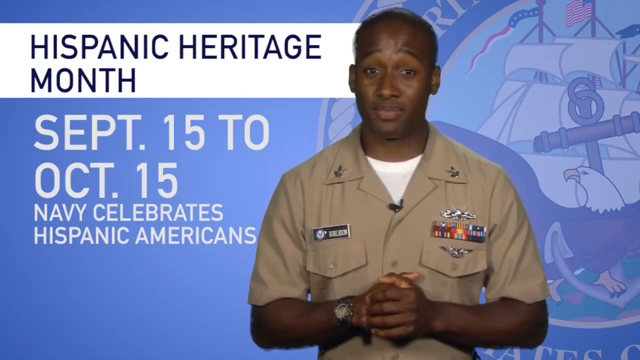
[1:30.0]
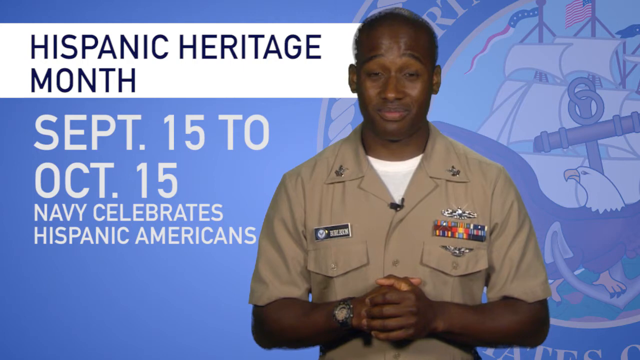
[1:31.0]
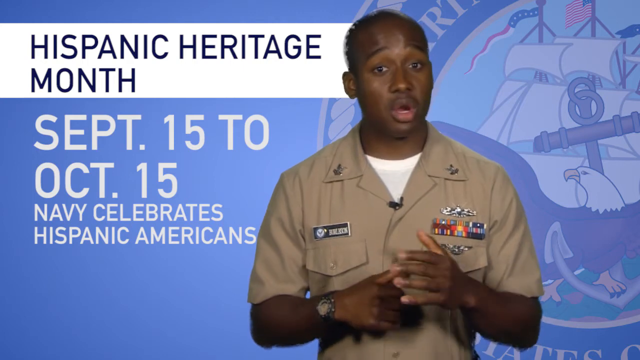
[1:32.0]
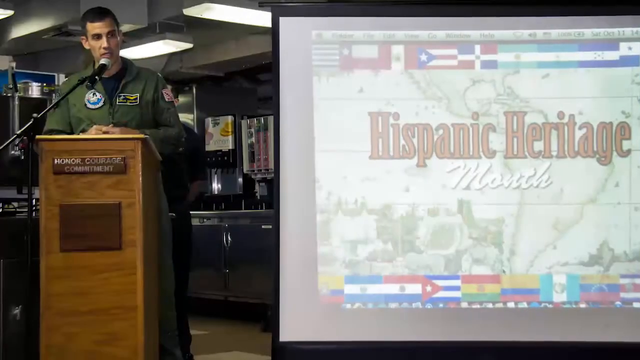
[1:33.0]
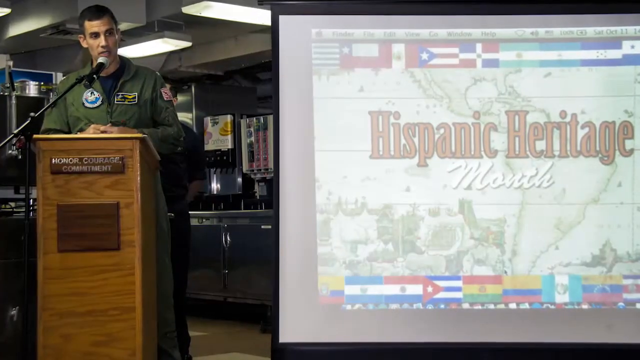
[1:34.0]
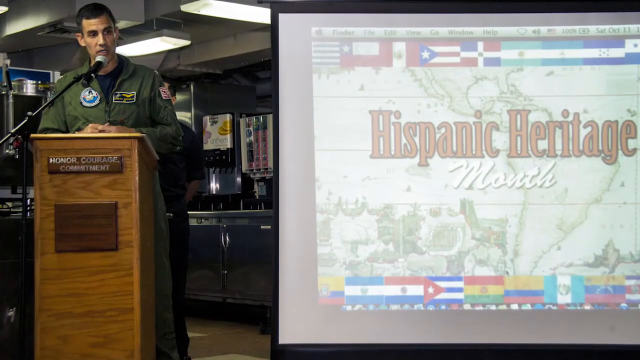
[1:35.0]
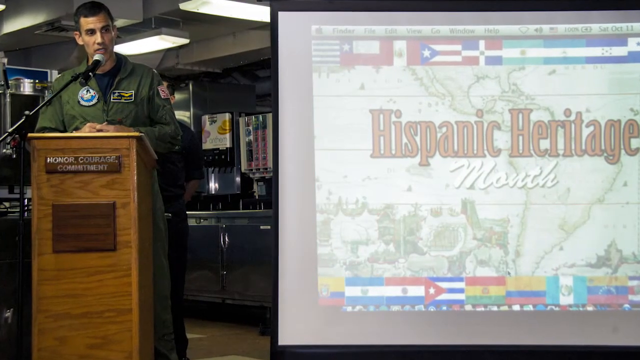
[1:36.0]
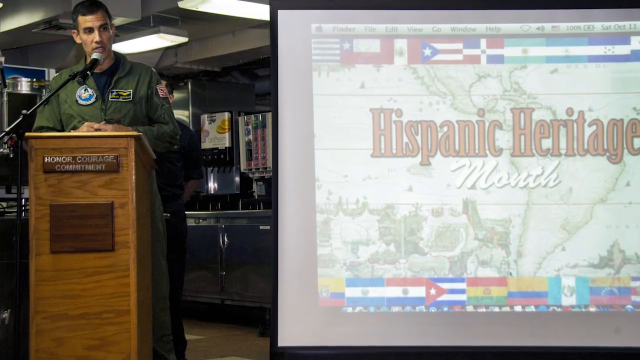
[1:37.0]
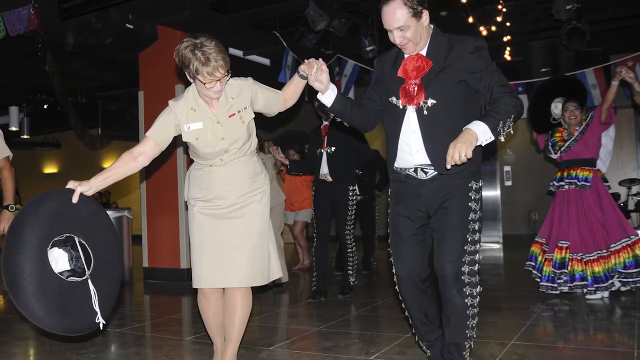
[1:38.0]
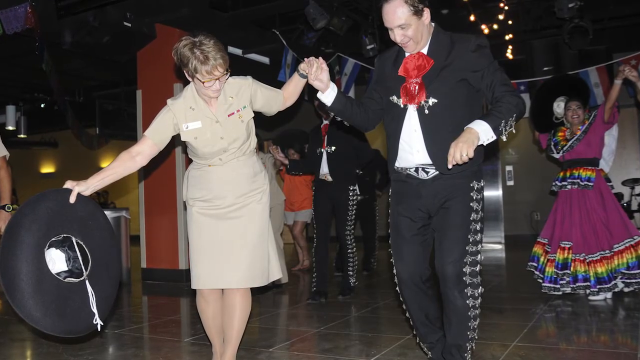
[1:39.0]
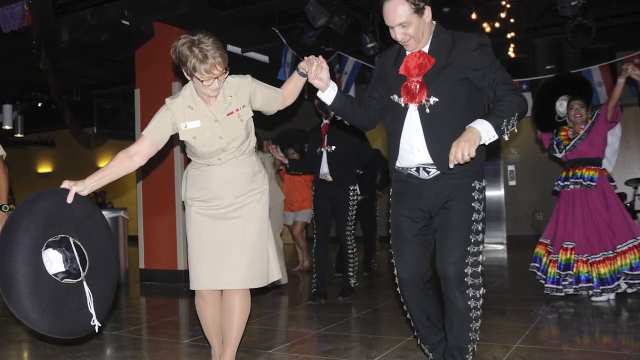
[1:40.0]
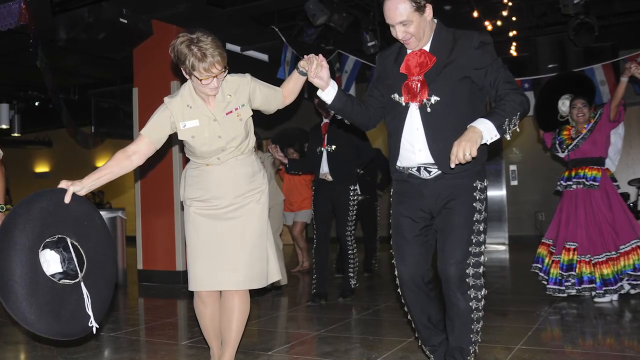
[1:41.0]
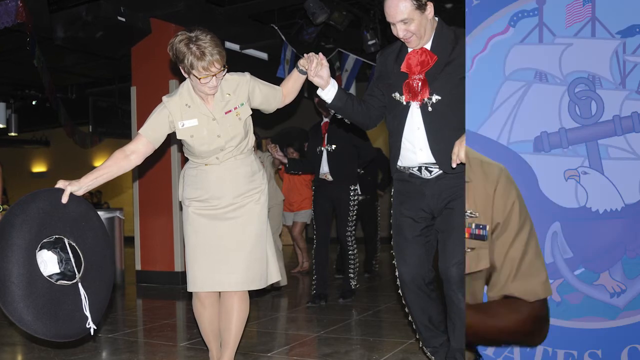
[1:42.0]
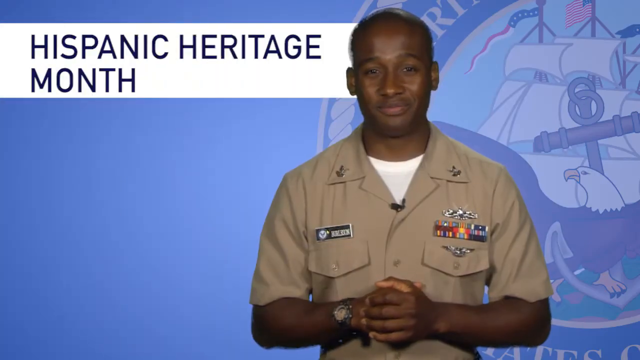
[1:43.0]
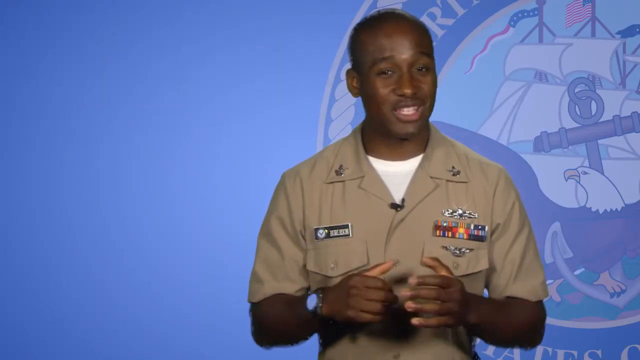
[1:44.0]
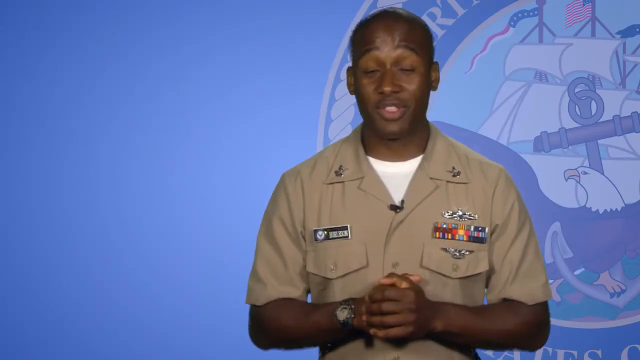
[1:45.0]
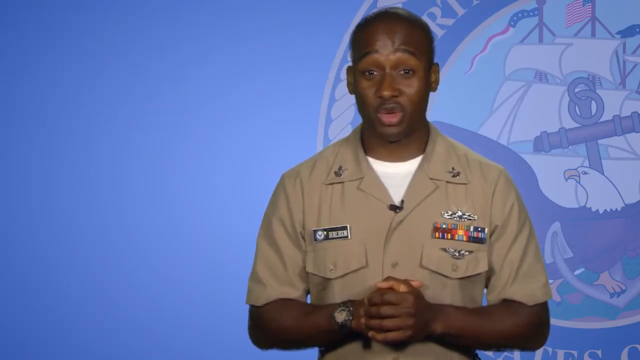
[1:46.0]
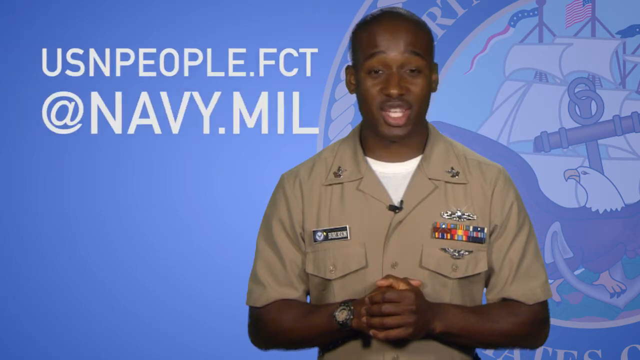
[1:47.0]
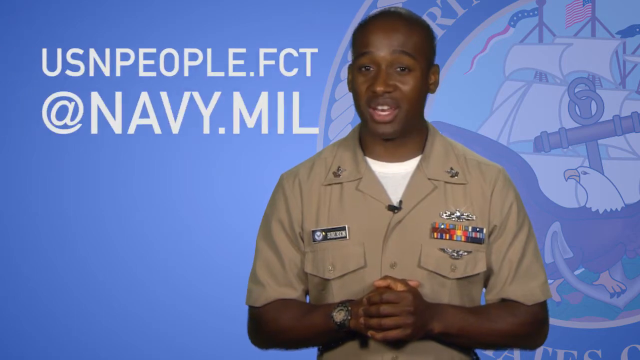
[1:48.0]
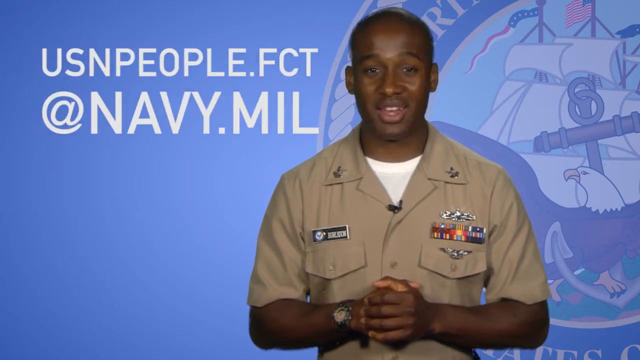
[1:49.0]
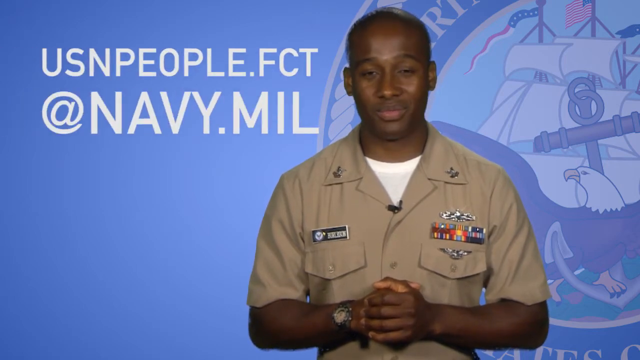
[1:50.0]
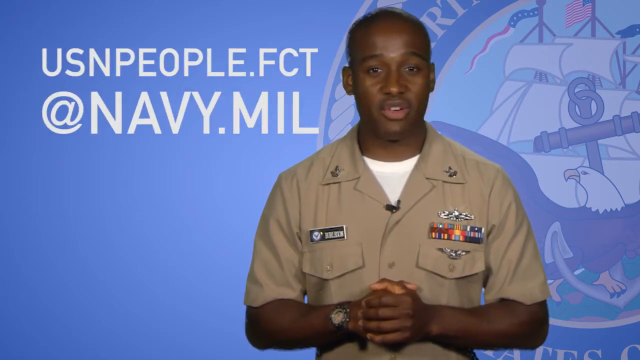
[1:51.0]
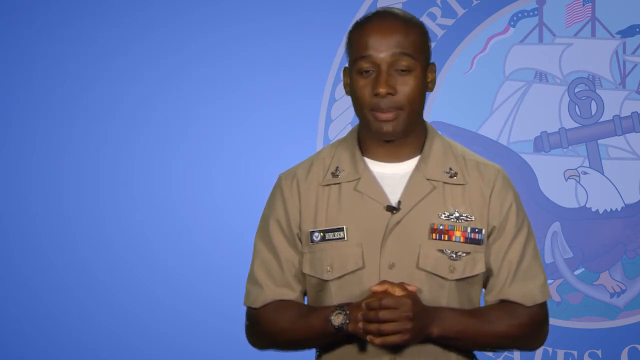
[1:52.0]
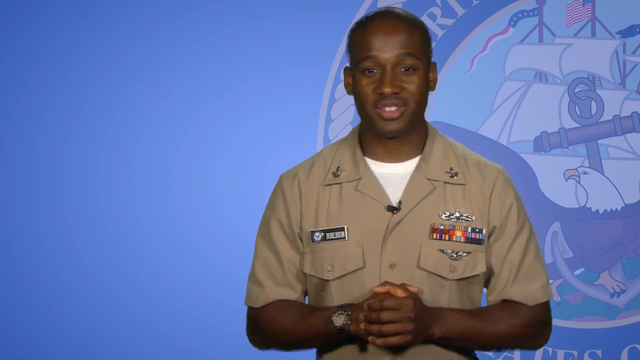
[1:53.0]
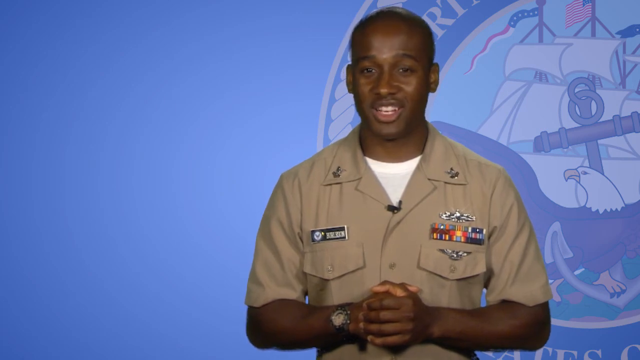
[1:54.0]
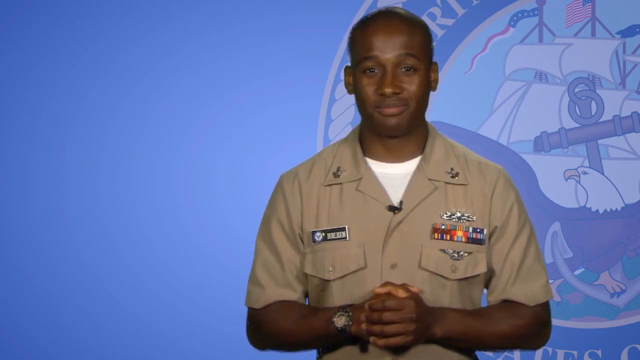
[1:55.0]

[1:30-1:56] The man continues his presentation under the title "Hispanic heritage month", with "September 15 to October 15 navy celebrates Hispanic Americans" written underneath. Next, a white man in a green navy uniform stands by a podium with a microphone in front of him. On the right side is written "Hispanic heritage month", and the top and bottom are filled with flags of different countries. An older white man in a black suit and white shirt holds hands with an older white woman, and they are dancing. The woman holds a hat in her other hand and wears glasses. Behind them is a black woman in a purple dress with a multicoloured pattern. They seem to be in a room where people are dancing. The video returns to the presenting man, and "Usnpeople.fct@navy.mil" appears on the screen.